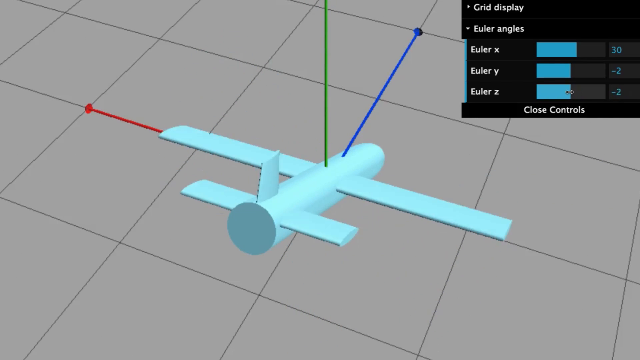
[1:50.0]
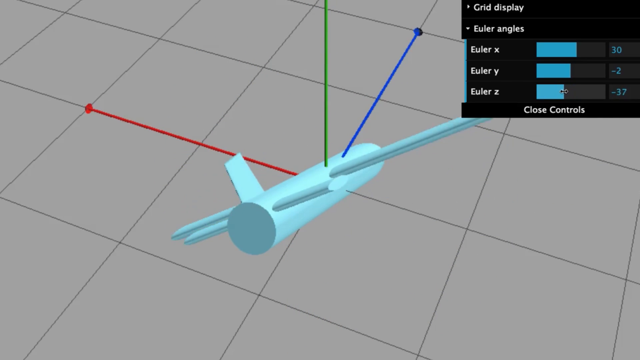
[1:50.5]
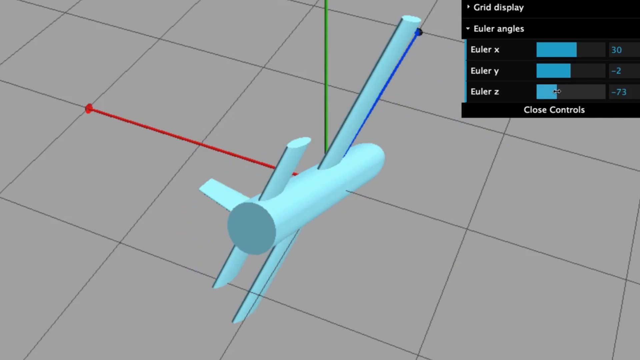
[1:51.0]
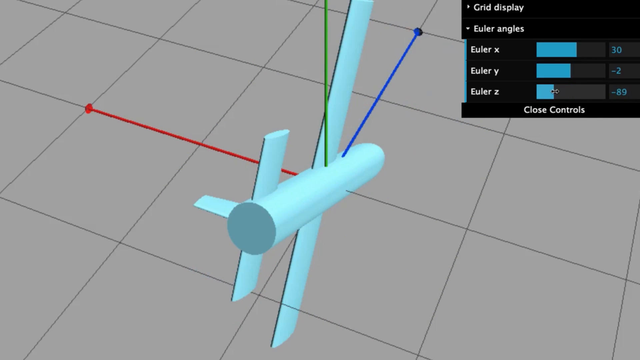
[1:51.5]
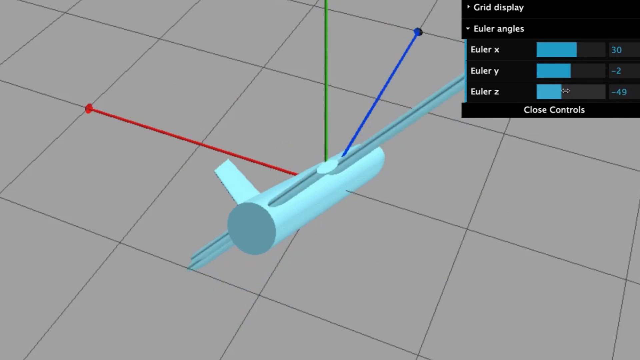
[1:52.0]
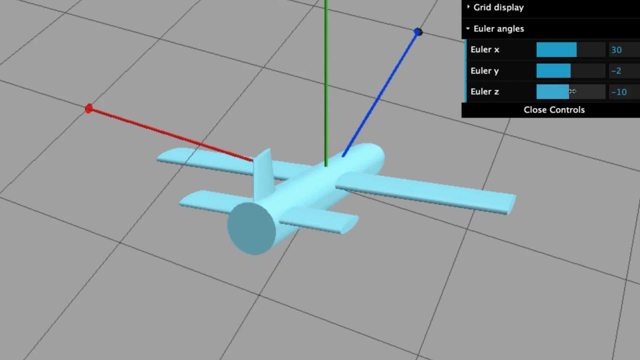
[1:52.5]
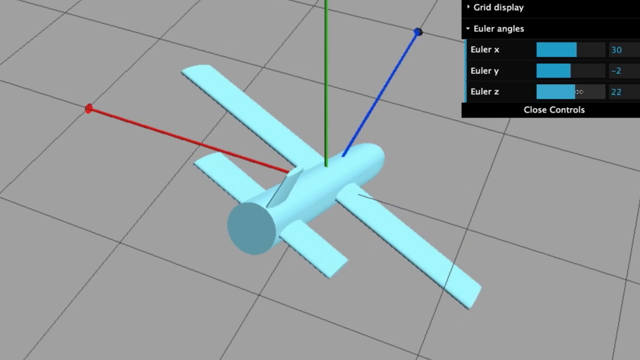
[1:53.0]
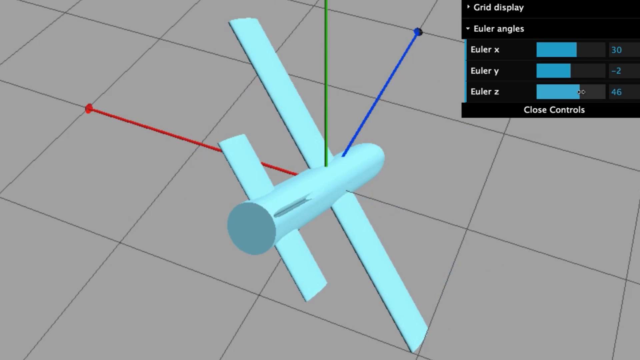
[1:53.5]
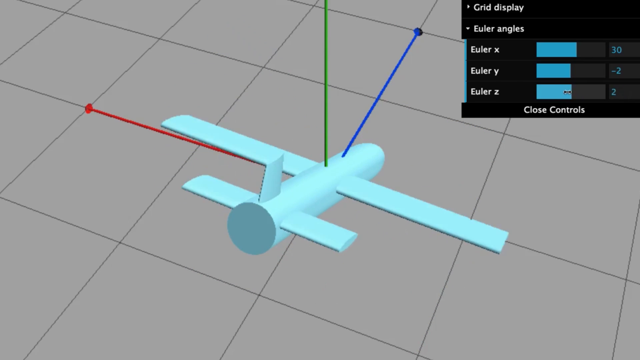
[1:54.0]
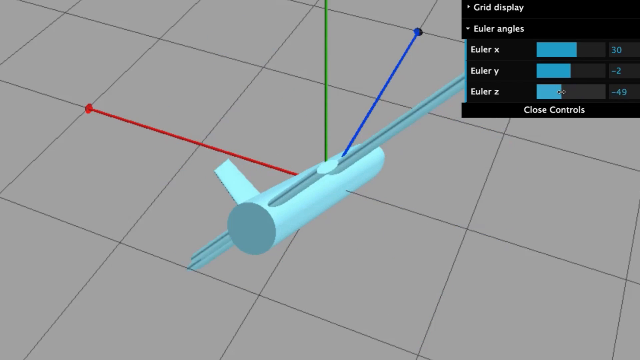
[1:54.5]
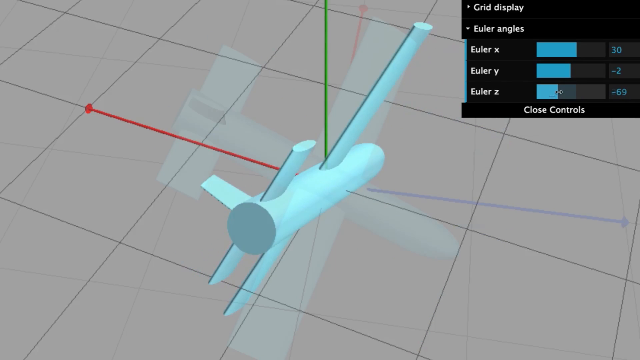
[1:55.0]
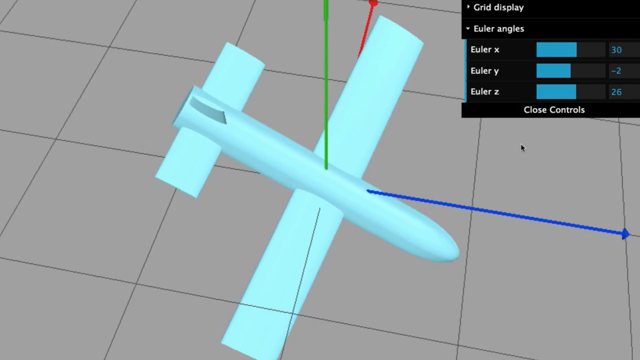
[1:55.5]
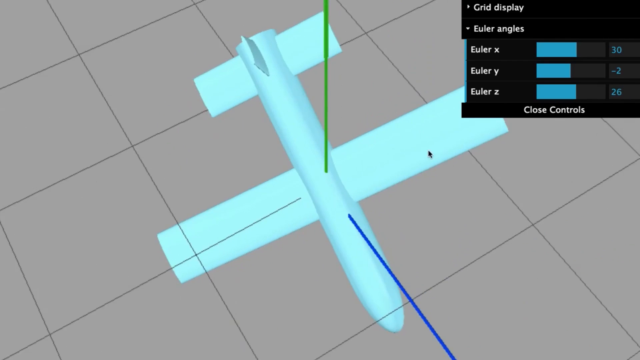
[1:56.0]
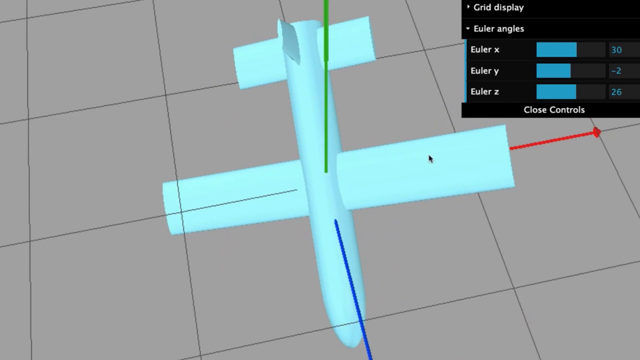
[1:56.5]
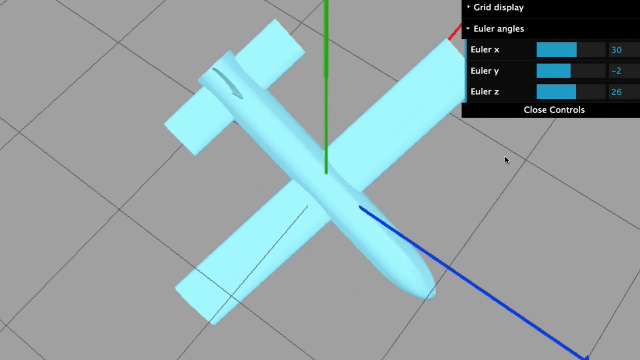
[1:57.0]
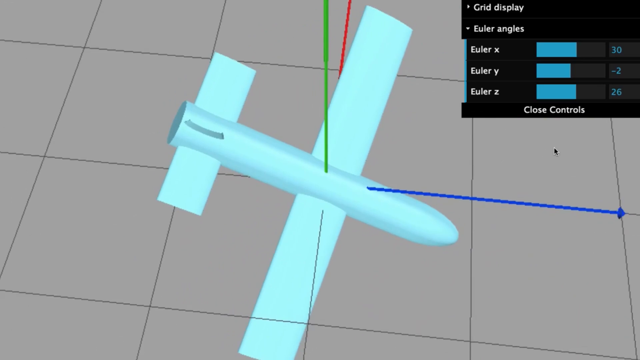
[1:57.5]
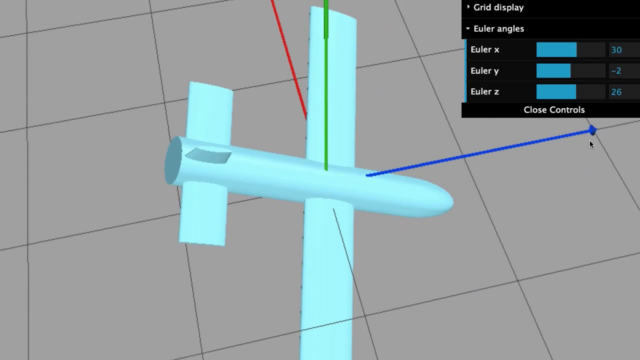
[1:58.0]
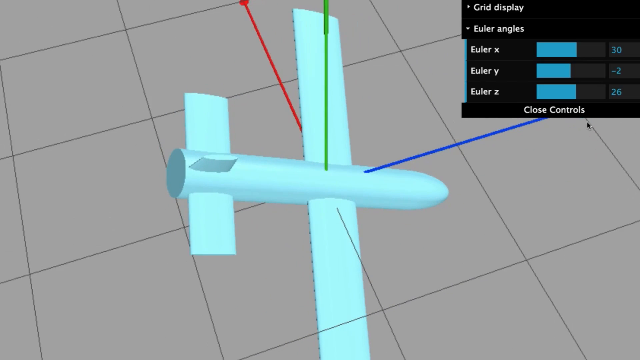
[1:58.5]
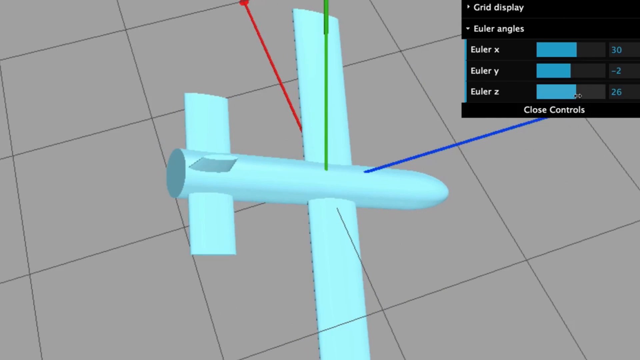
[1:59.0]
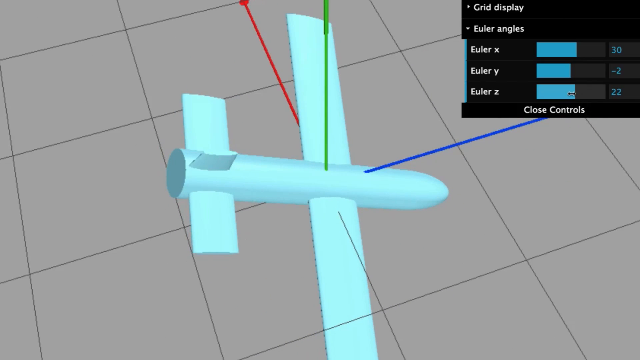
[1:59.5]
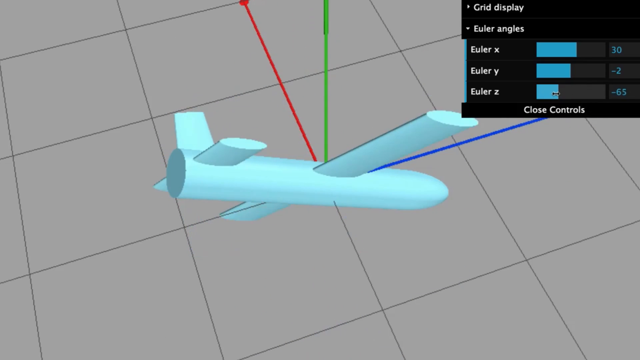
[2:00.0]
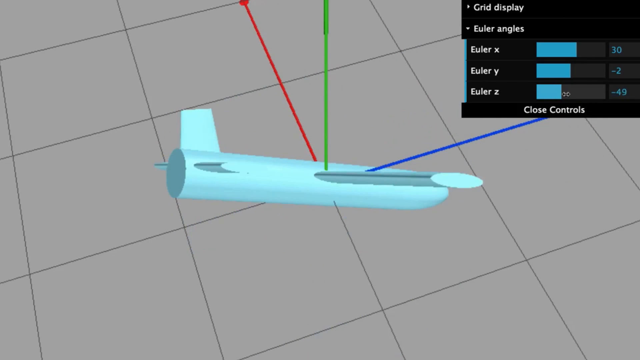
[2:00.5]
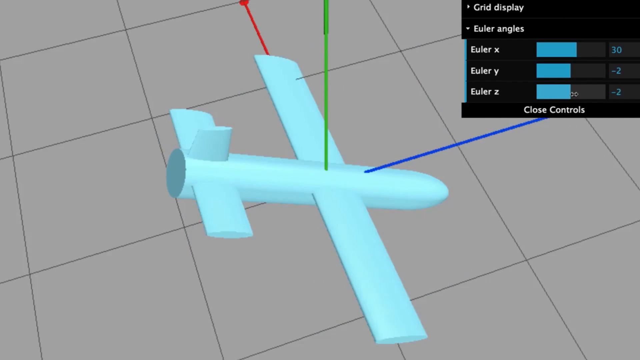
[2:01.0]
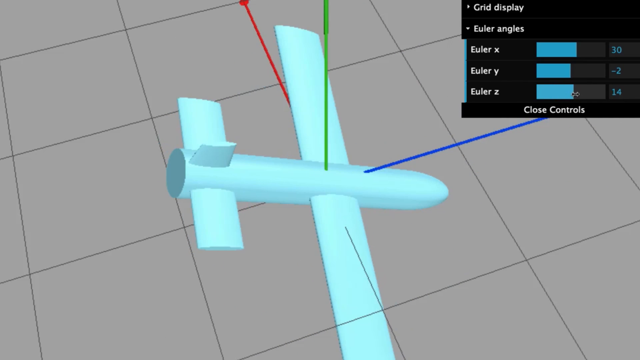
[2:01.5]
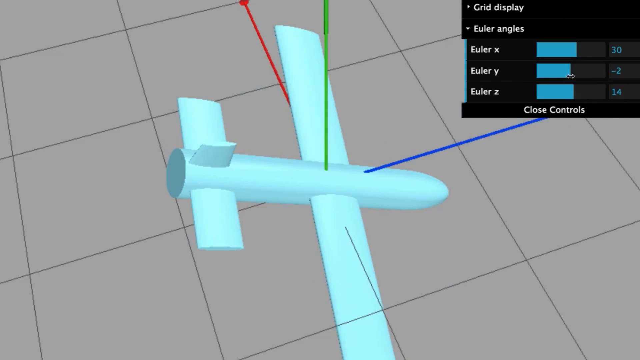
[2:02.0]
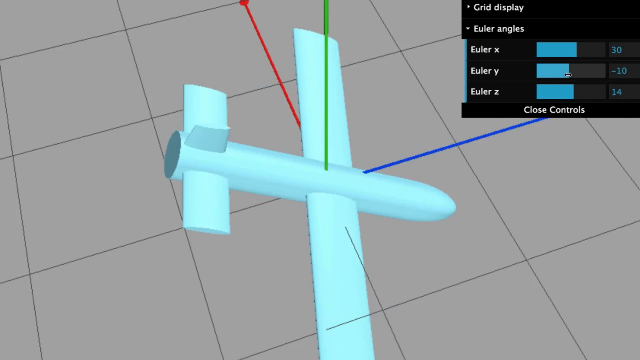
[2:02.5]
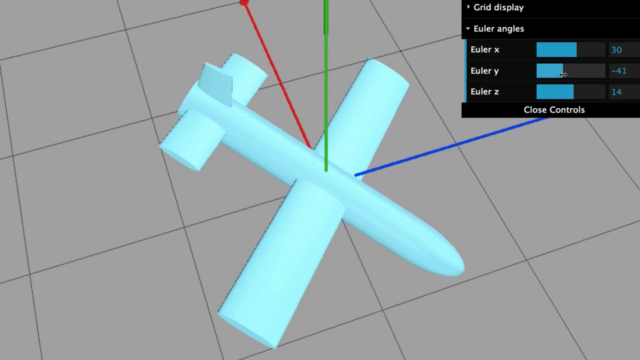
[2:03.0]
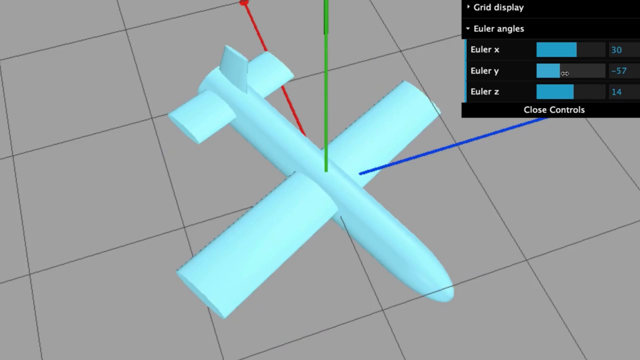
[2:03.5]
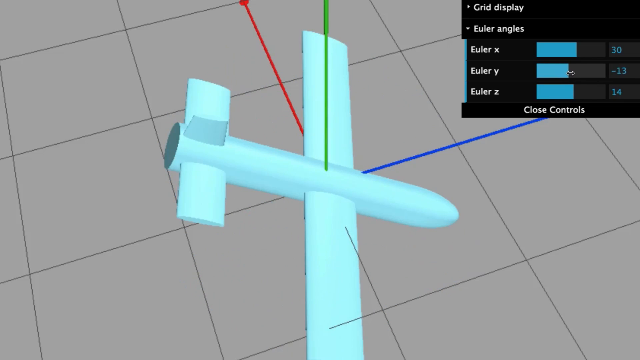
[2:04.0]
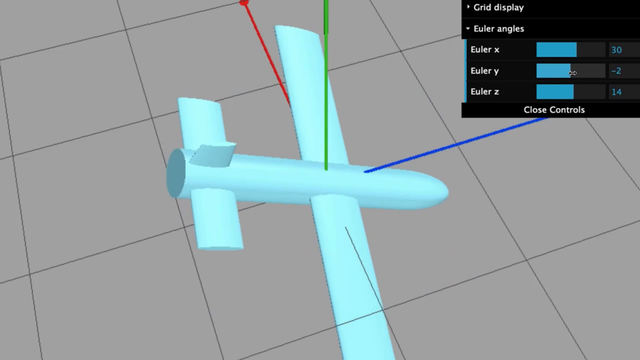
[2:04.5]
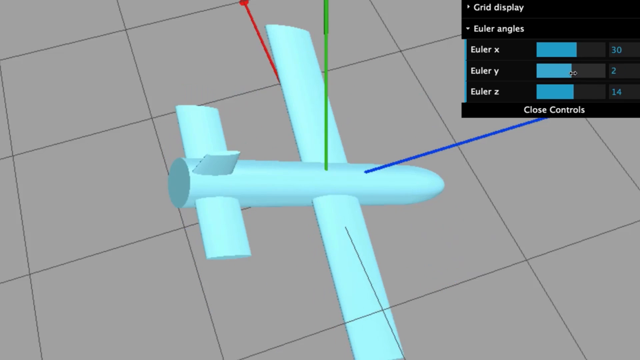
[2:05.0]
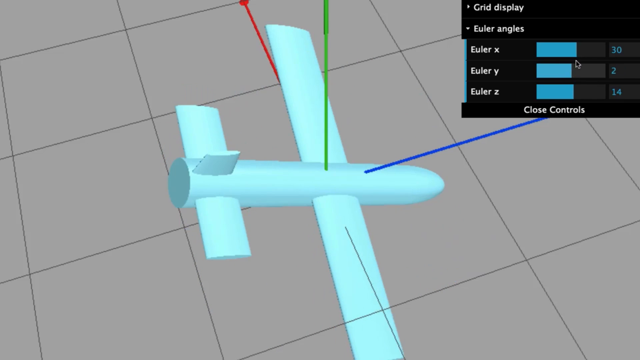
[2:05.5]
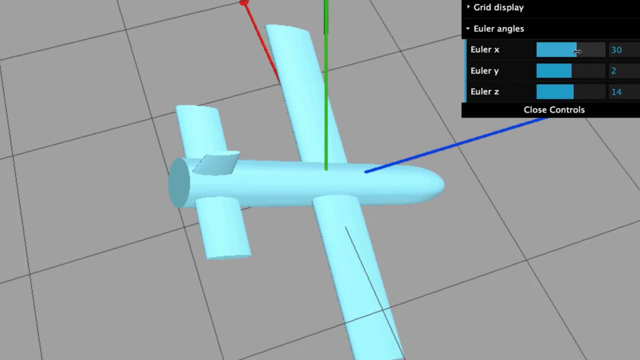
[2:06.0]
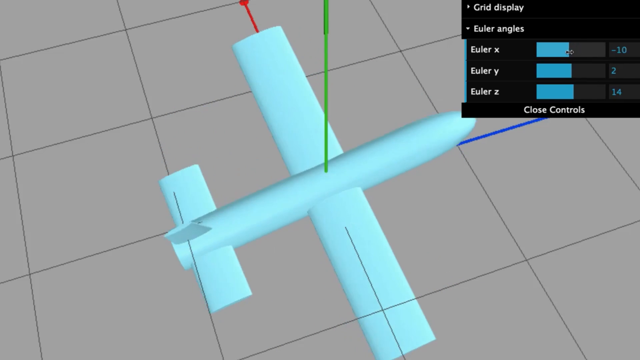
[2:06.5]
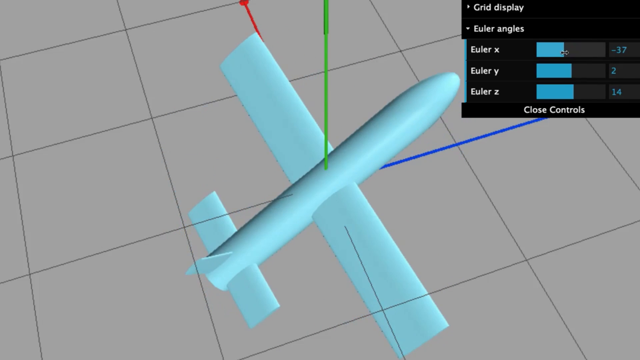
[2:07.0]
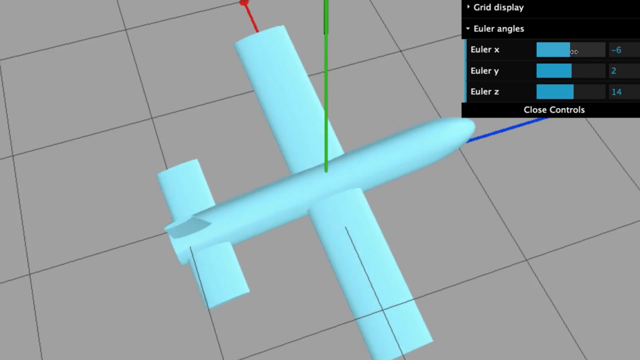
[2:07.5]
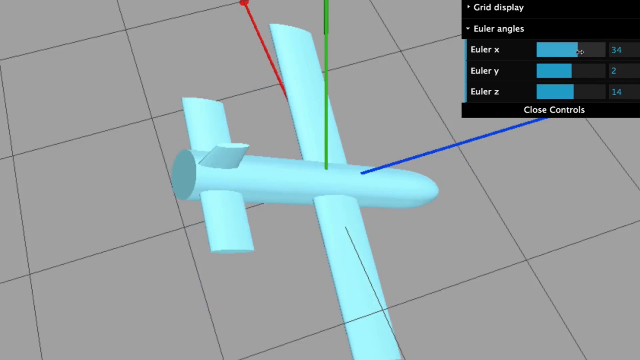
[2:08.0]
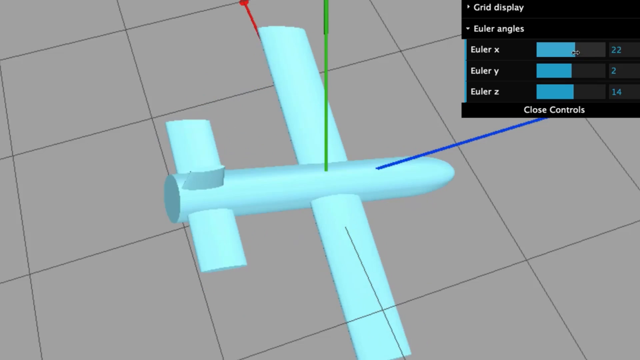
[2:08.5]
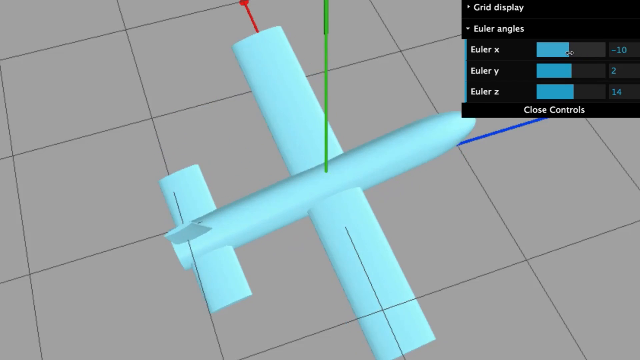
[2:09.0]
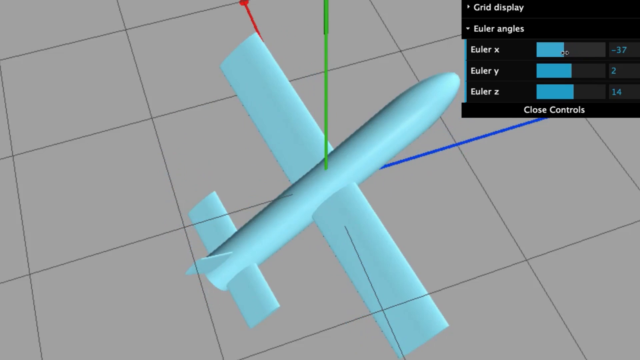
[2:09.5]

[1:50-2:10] The whole screen is made up of light gray squares, with an airplane shape in the middle: a blue tube body with long light blue squares as wings off the left and right sides, and at the end of the tube two smaller wings and a fin coming up off it. A green line comes down from the top of the screen and touches the top of the airplane, another line touches the front and goes off the right side, and a red line also touches the airplane. Someone controls it with a mouse; the pointer moves along the screen, and as it moves, the little blue airplane switches positions so it can be seen from every view. In the top right-hand corner is a smaller black screen with "grid display" at the top, then "Euler angles" and a list reading "Euler X", "Euler Y" and "Euler Z". To the right are progress bars, the first half filled with light blue and the second half black. As the person spins the airplane, the progress bars get fuller and emptier, up and down. Along the bottom of that box, in white letters, is "close controls".